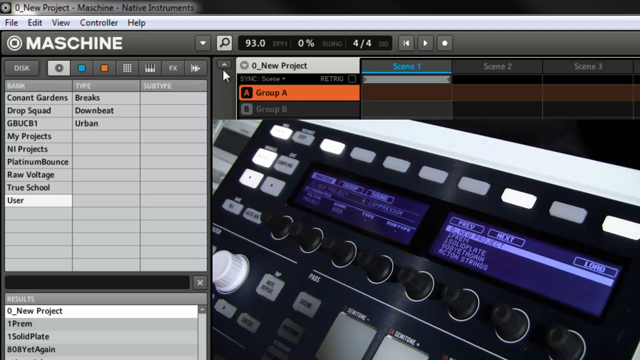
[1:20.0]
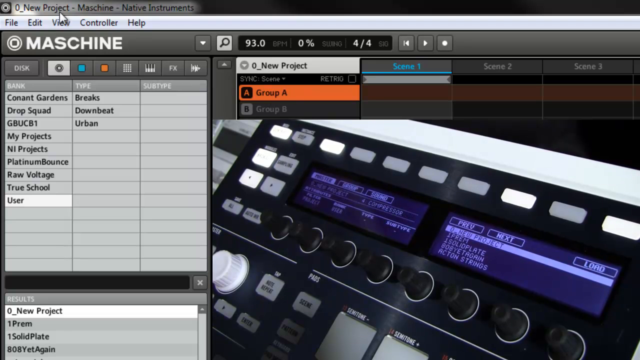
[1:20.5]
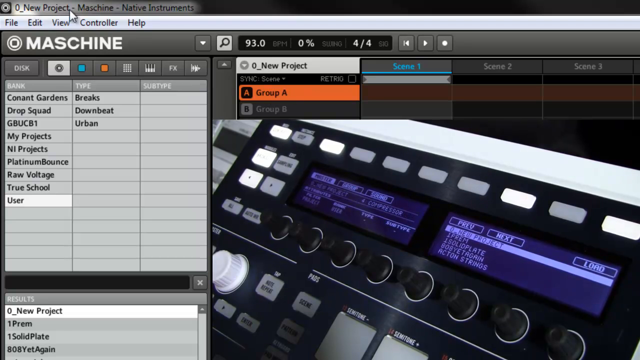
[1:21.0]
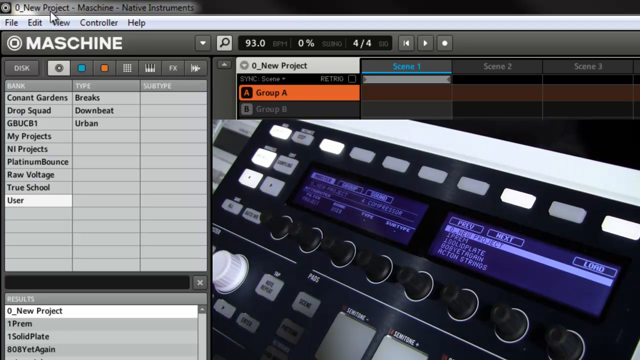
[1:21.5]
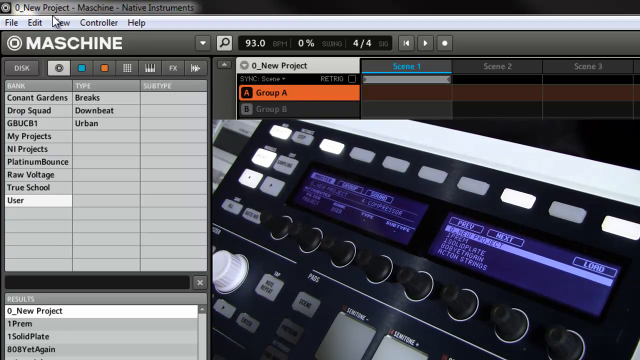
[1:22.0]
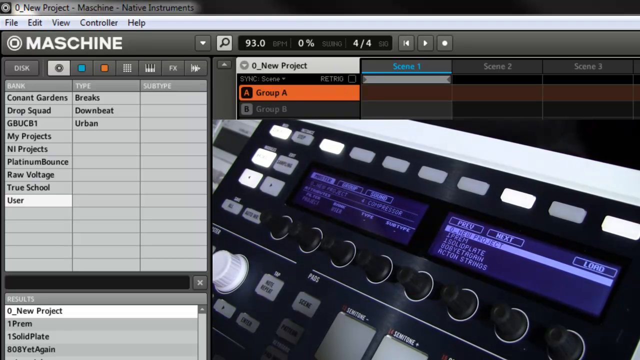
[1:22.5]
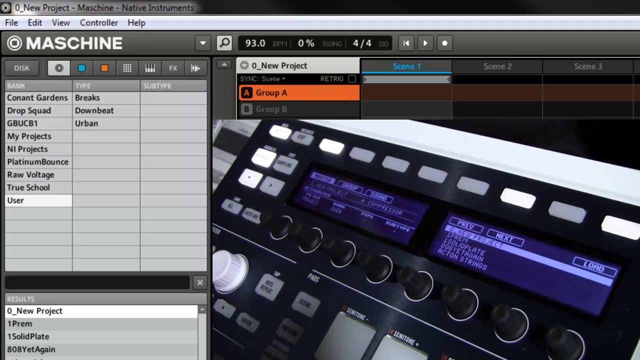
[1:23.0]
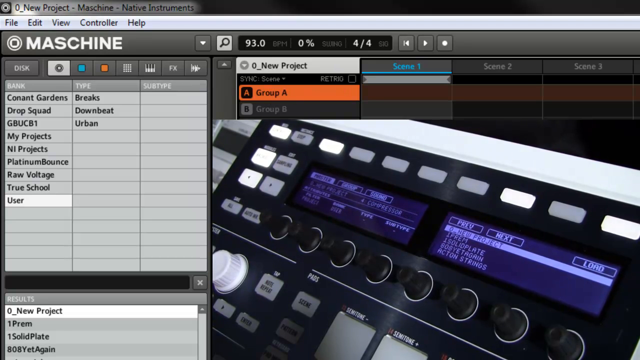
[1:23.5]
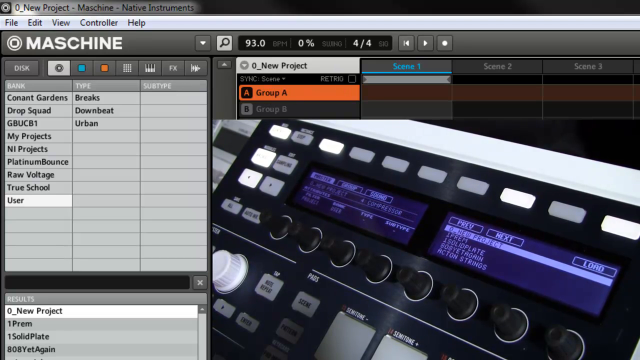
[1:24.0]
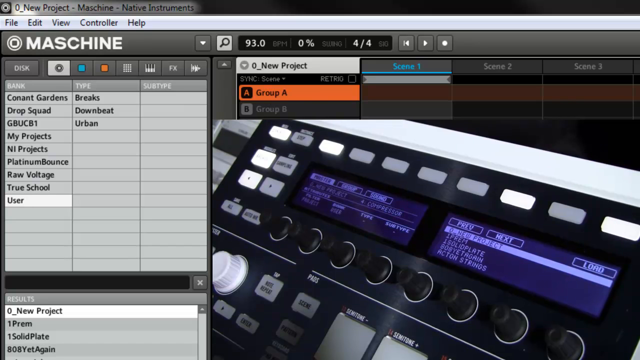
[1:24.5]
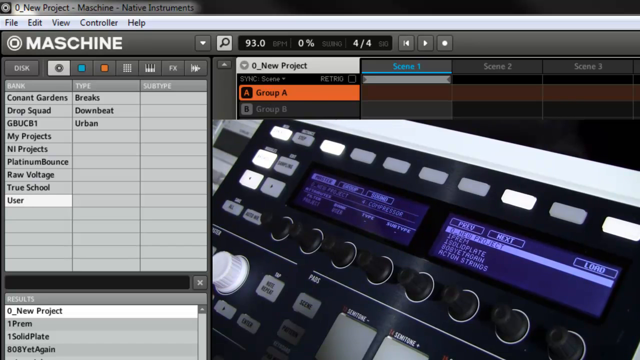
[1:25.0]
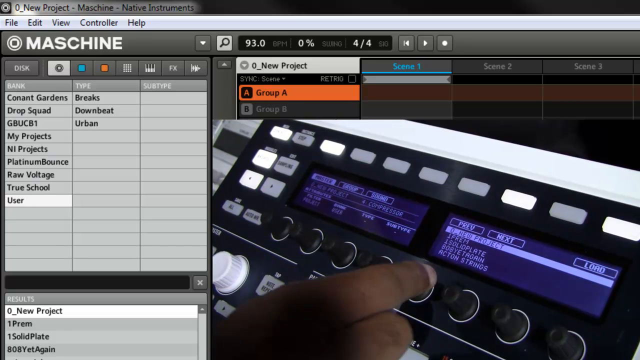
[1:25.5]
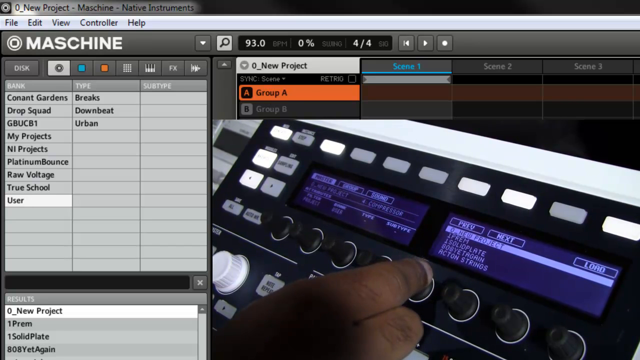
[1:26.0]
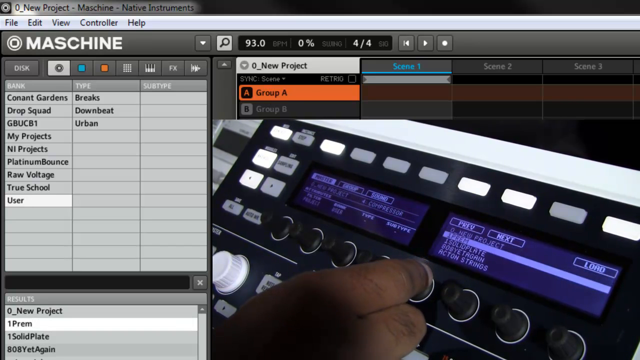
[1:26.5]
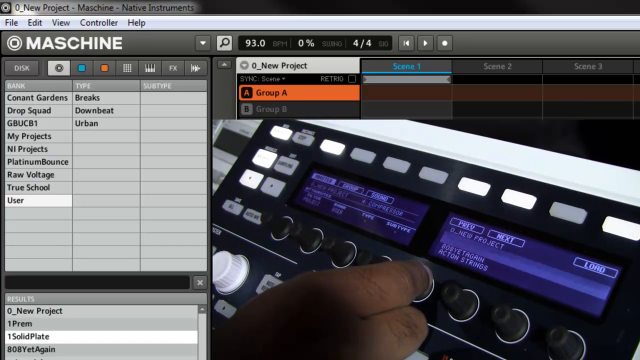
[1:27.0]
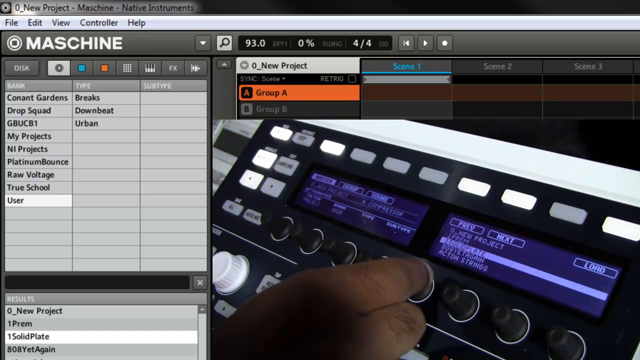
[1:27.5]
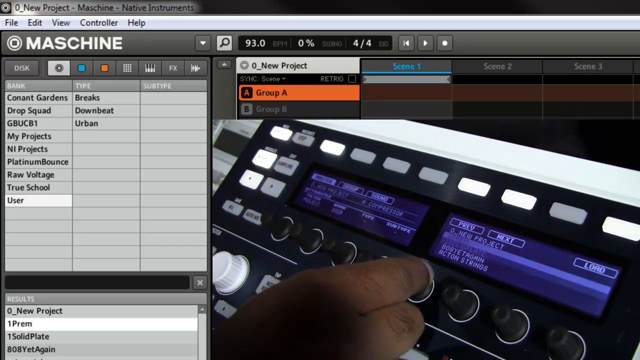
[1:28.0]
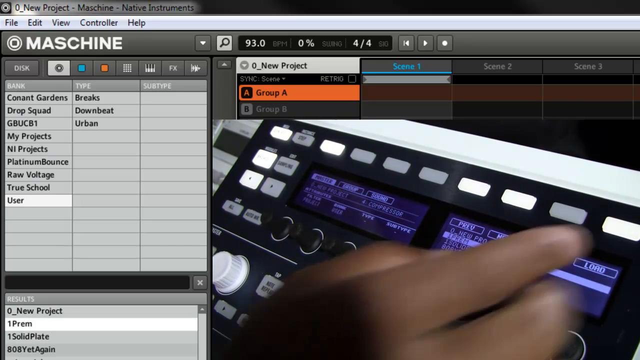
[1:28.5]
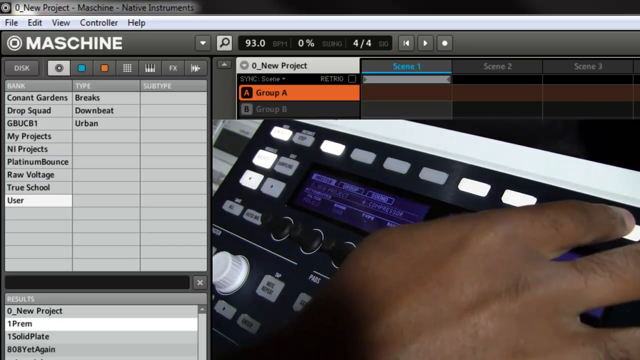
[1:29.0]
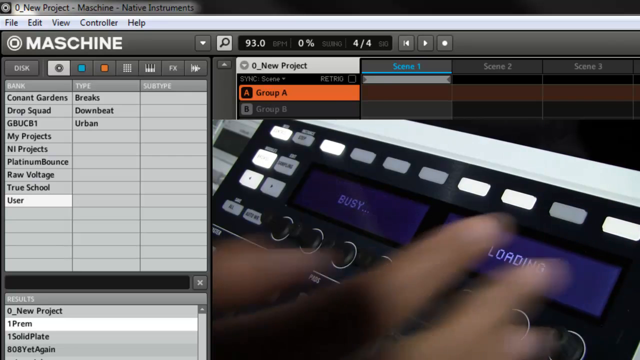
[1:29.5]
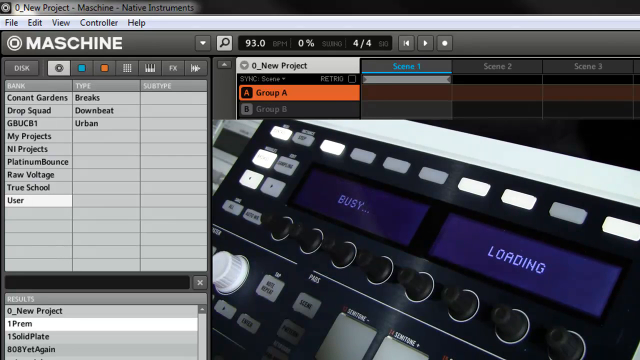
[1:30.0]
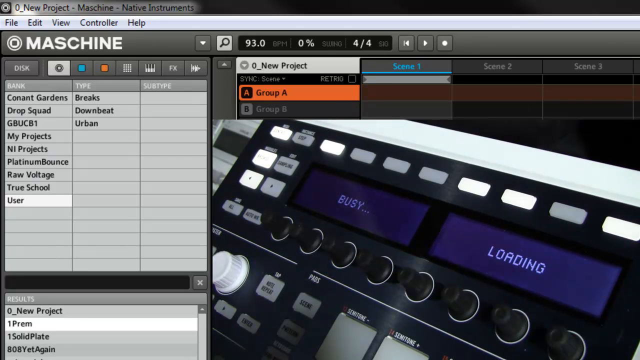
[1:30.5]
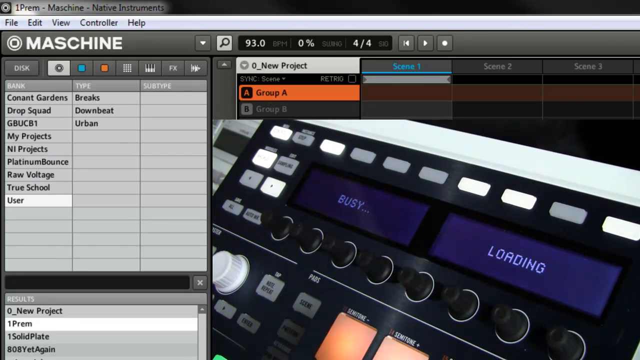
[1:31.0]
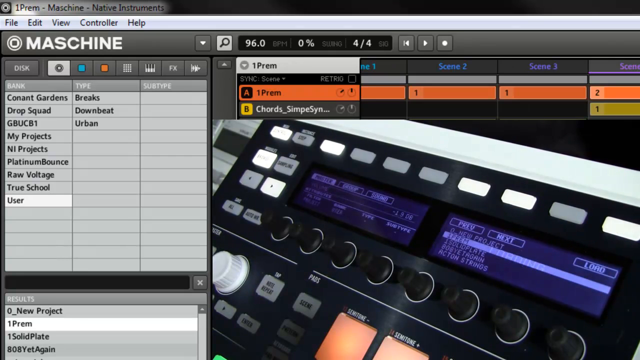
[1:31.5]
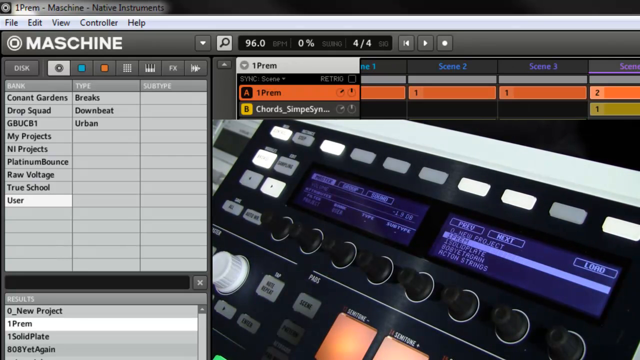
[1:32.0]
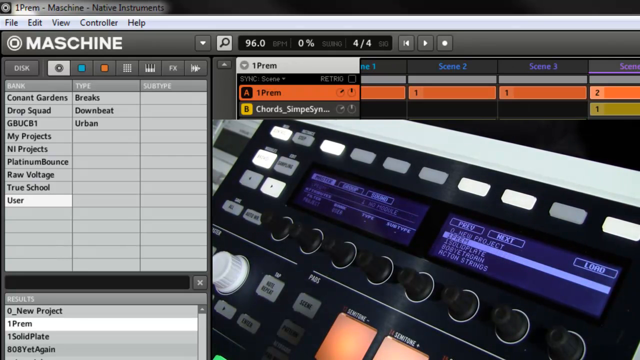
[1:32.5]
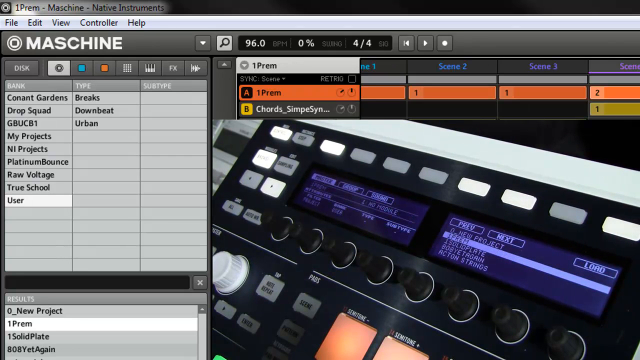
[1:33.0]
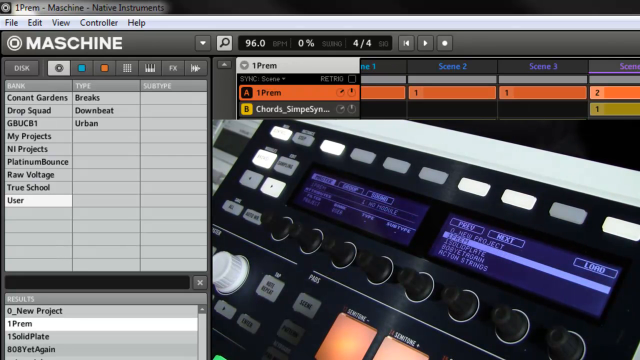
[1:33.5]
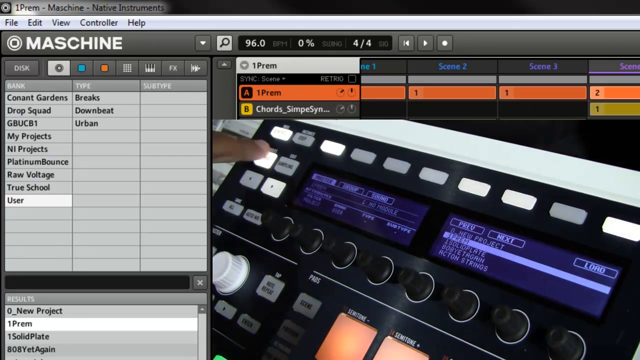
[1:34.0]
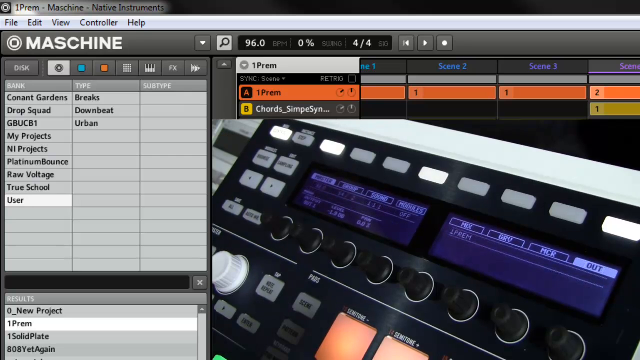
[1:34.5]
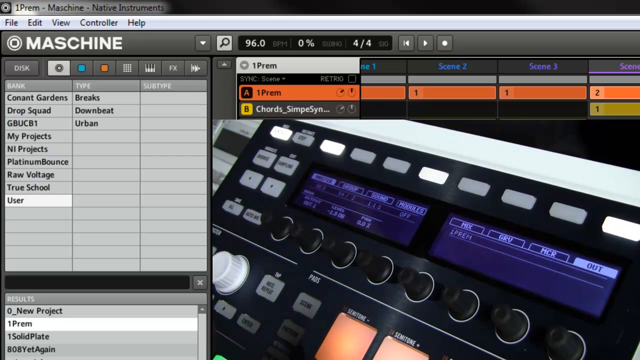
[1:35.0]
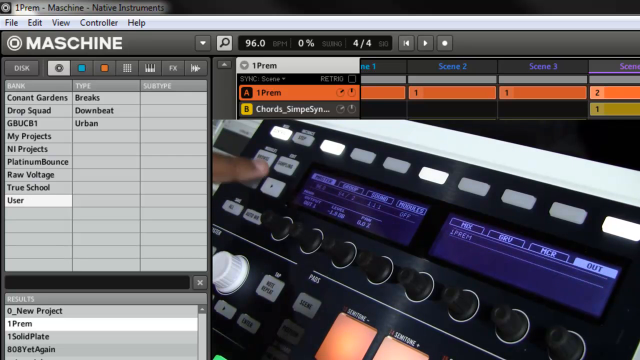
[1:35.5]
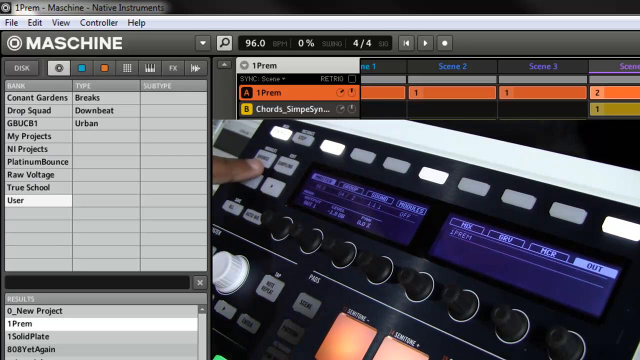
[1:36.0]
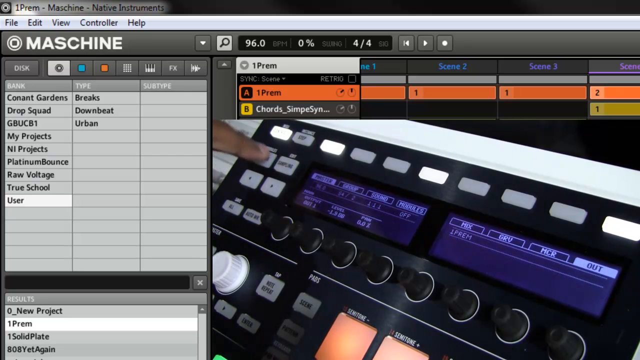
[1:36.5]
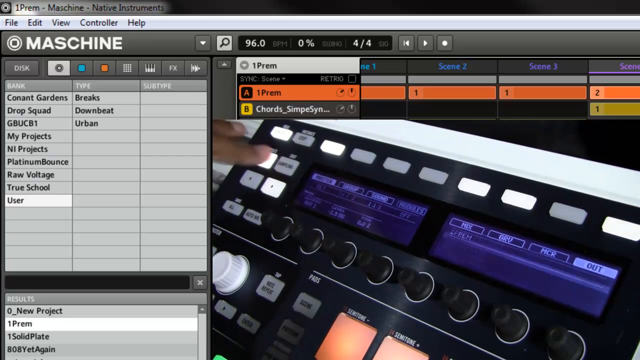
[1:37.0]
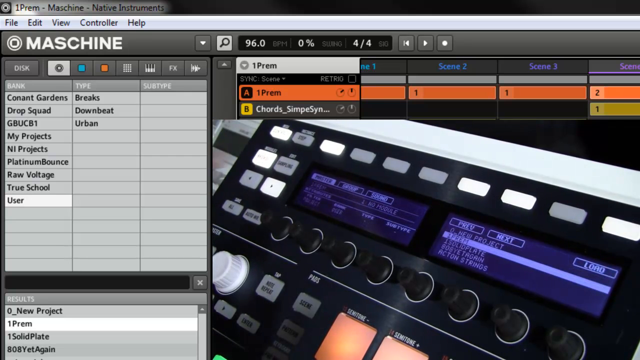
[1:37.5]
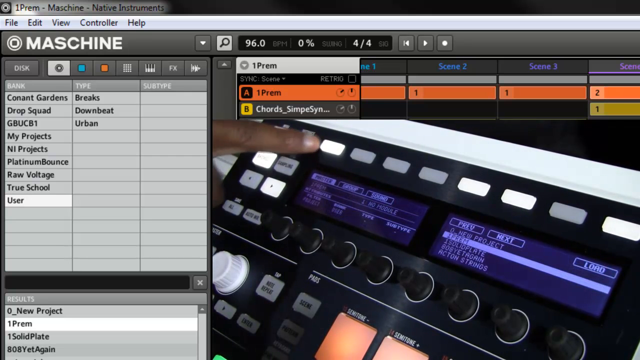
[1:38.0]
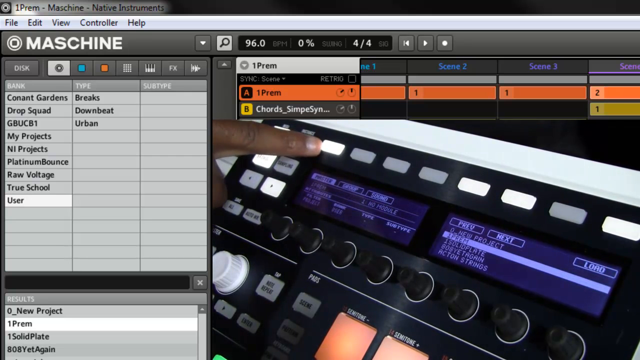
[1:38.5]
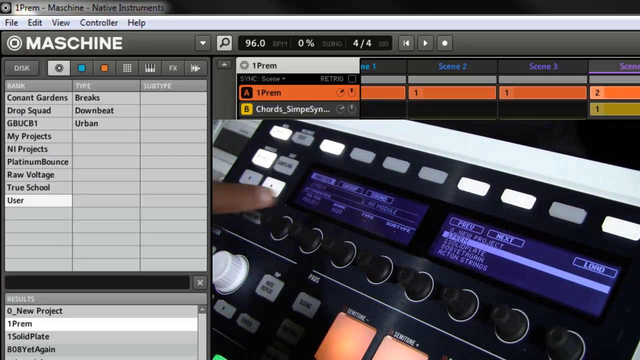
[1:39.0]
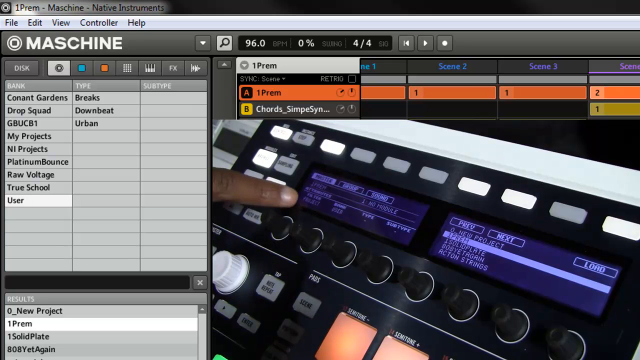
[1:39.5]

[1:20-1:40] The focus is on the video overlay in the bottom right of the screen. The mouse is visible above the overlay, and it moves over to the top left of the screen, appearing to try to highlight something. The hand reappears from the bottom and starts playing with the knobs below the right screen. He then moves the hand upward and to the right and touches one of the buttons. Text appears on the two screens: the left one says "busy" and the right one says "loading". The screens then change, and the content of the columns in the application interface also changes, with the left column suddenly becoming populated. The hand comes back in from the left side of the screen to point to one of the buttons, not appearing to touch it. It comes back in with the index finger visible and touches one of the buttons in the top left, which lights up. He then points to one of the buttons on the top left of the left screen and points to the screen as well.